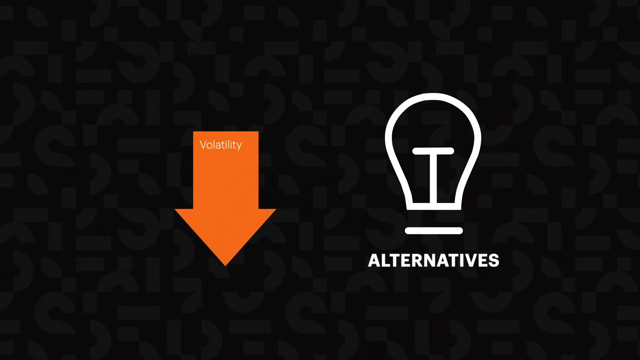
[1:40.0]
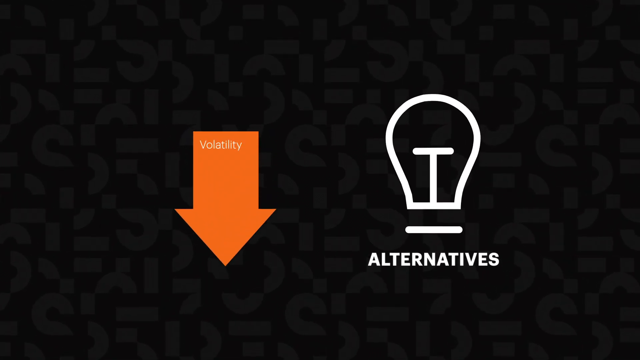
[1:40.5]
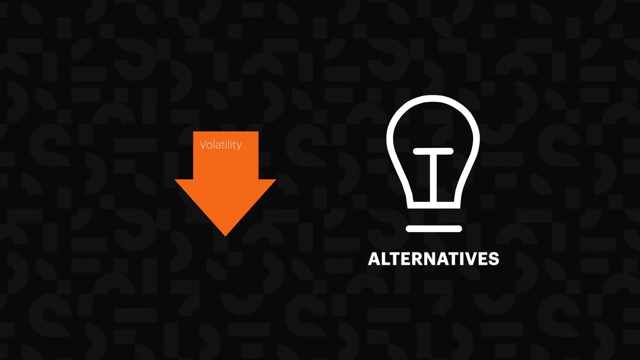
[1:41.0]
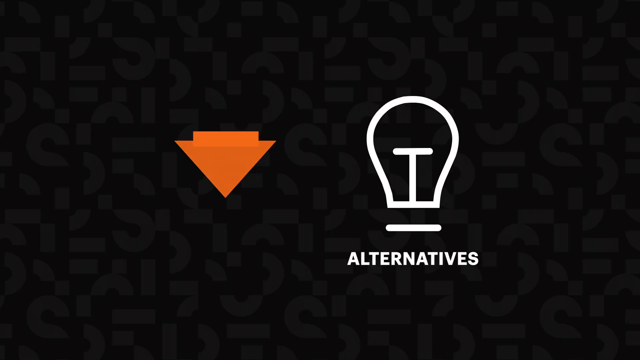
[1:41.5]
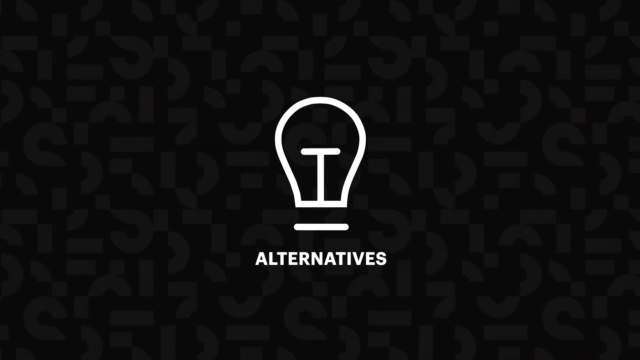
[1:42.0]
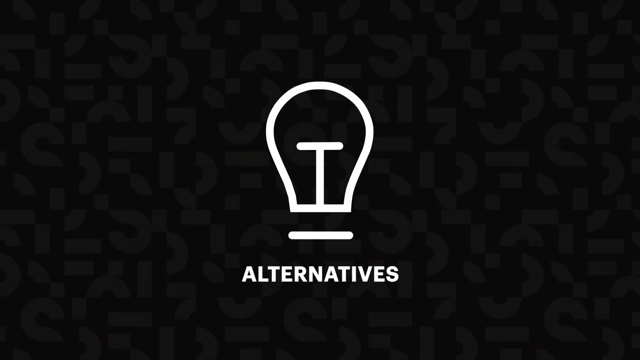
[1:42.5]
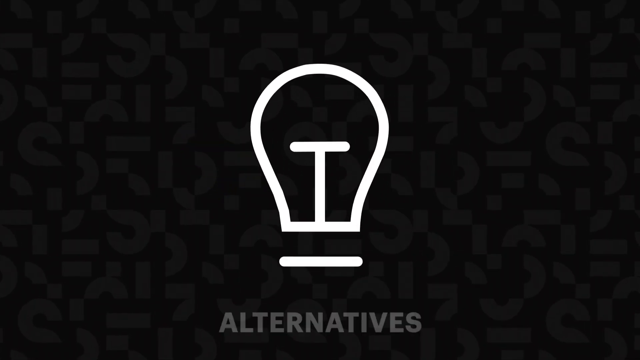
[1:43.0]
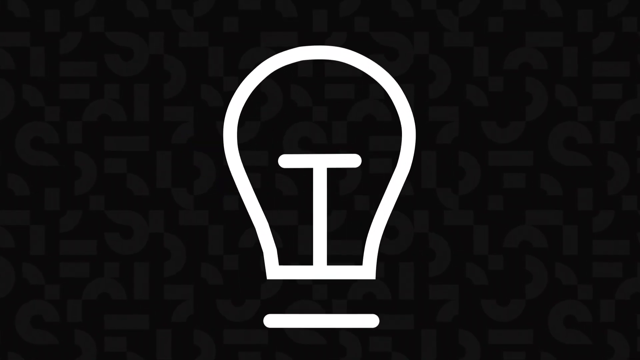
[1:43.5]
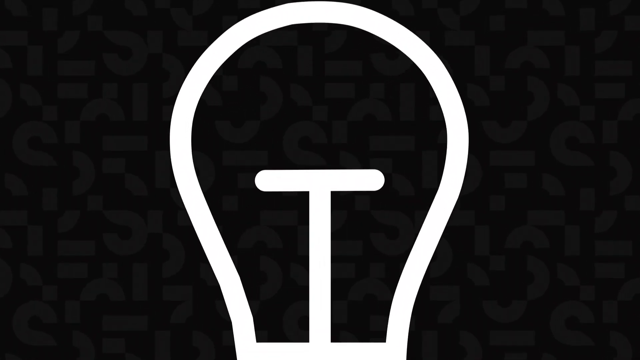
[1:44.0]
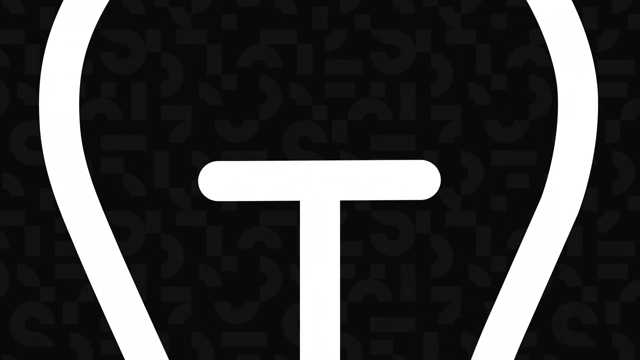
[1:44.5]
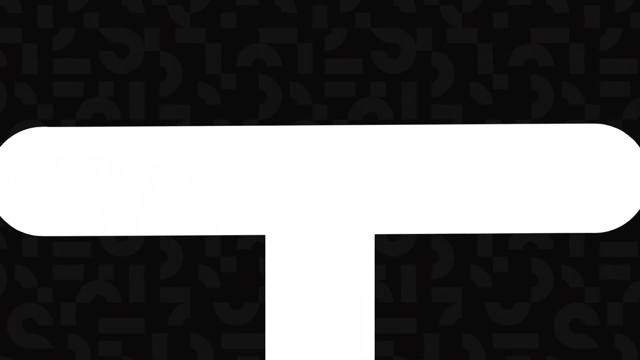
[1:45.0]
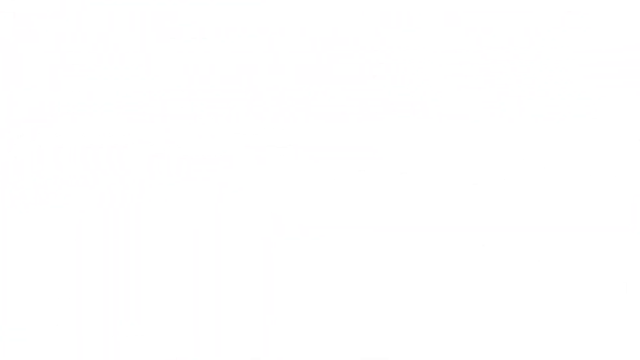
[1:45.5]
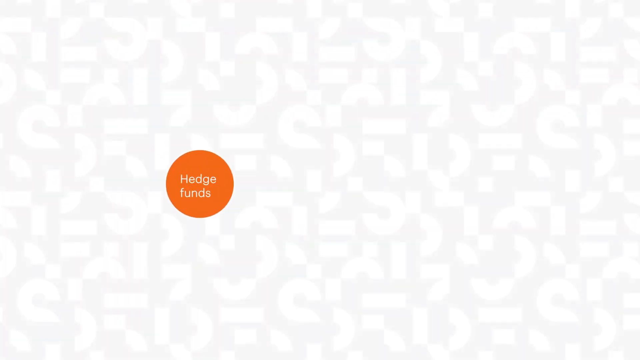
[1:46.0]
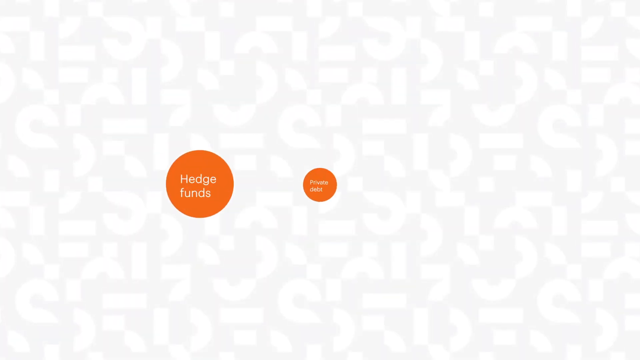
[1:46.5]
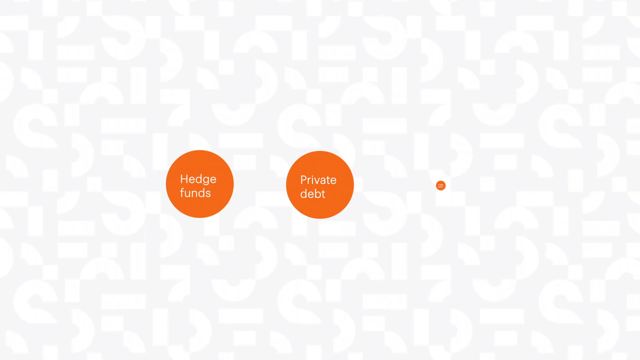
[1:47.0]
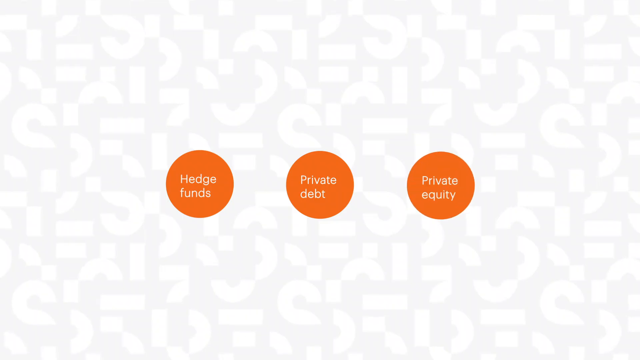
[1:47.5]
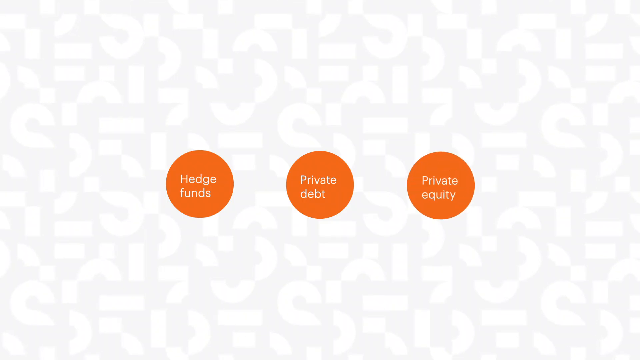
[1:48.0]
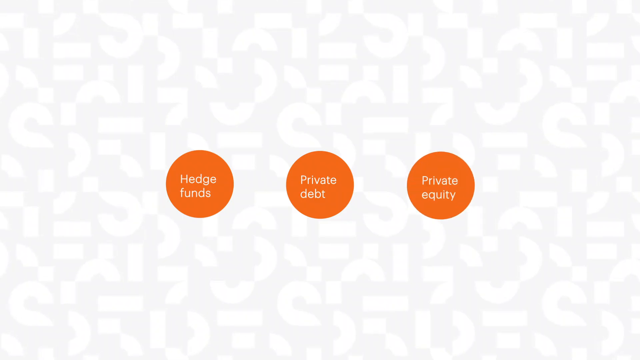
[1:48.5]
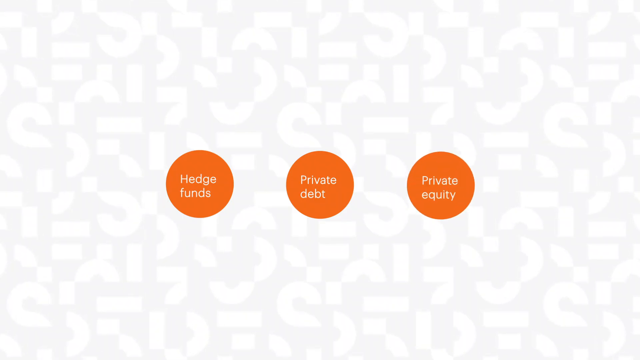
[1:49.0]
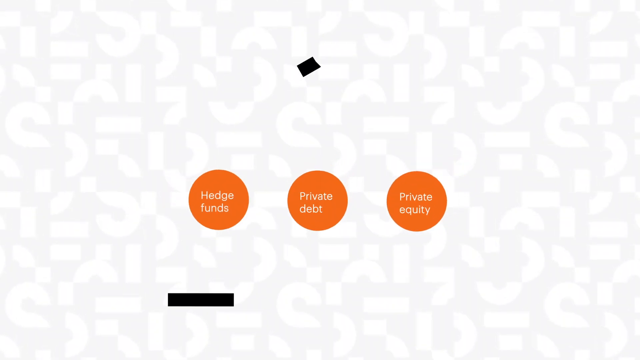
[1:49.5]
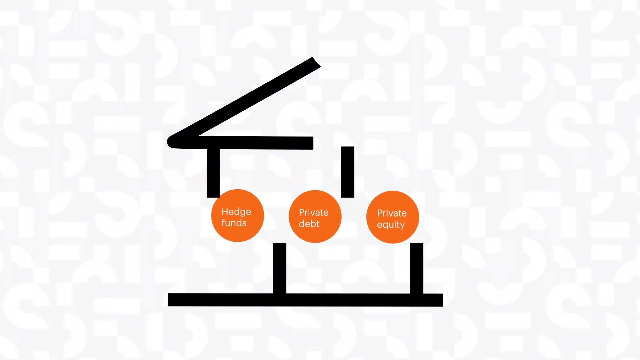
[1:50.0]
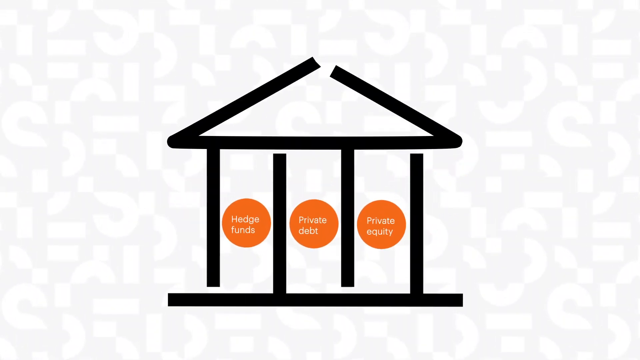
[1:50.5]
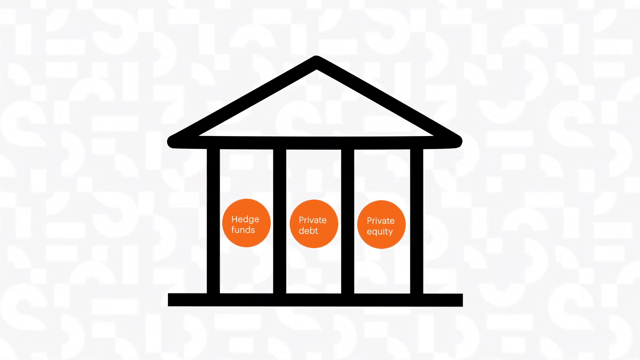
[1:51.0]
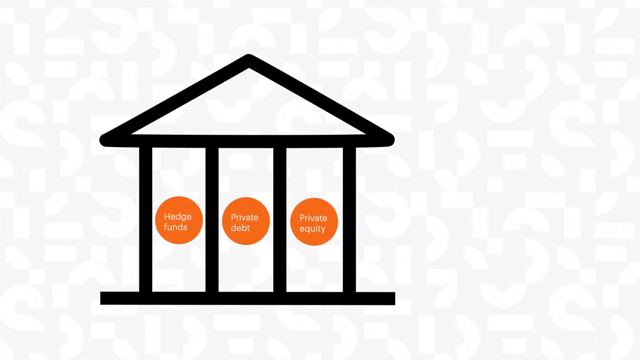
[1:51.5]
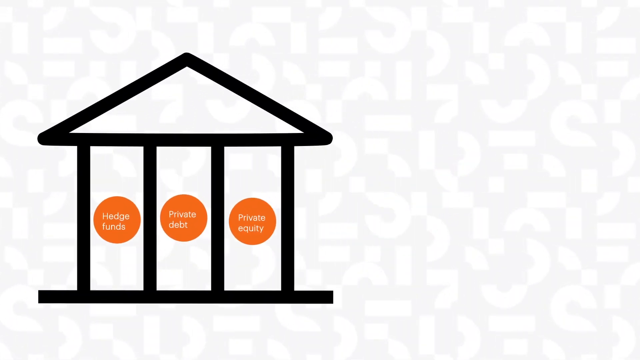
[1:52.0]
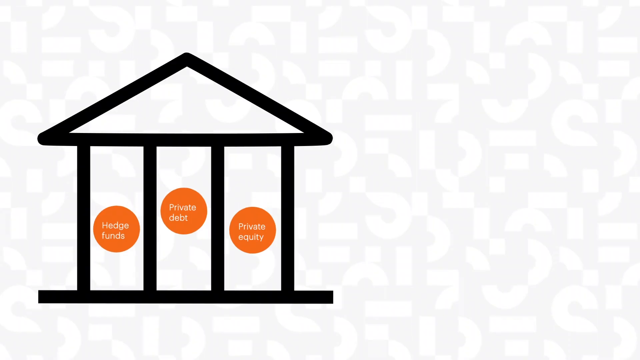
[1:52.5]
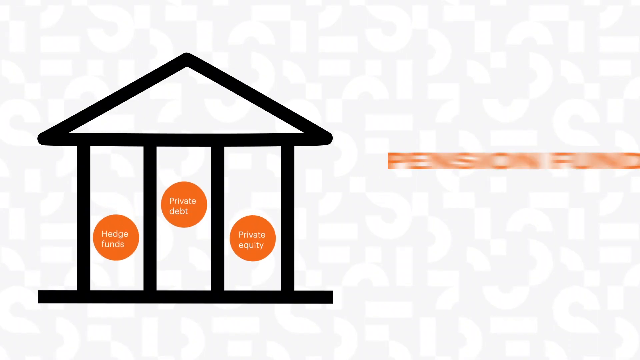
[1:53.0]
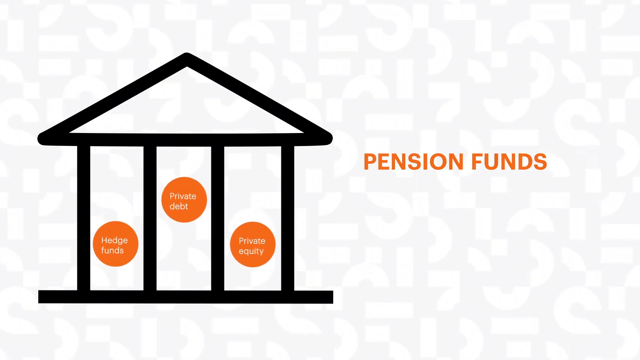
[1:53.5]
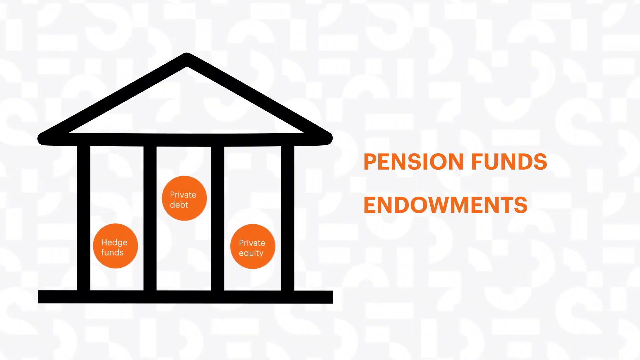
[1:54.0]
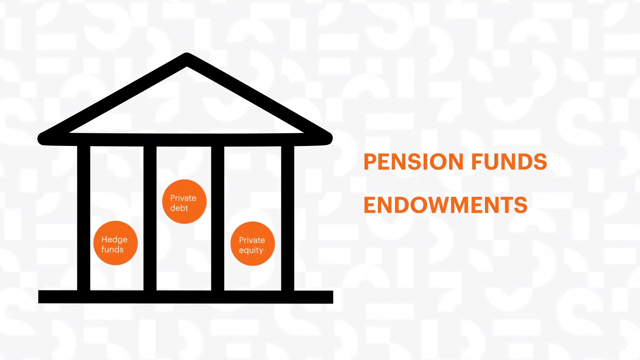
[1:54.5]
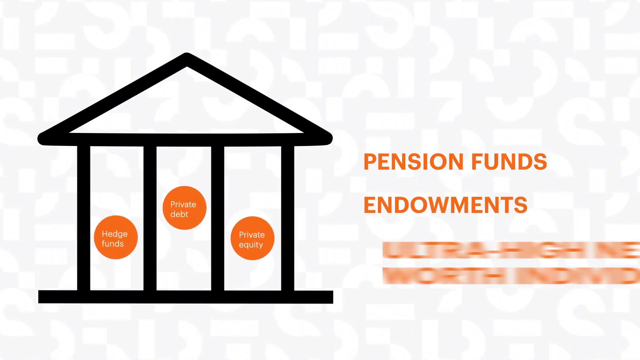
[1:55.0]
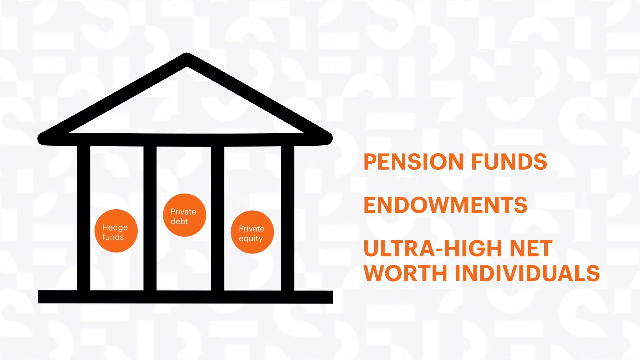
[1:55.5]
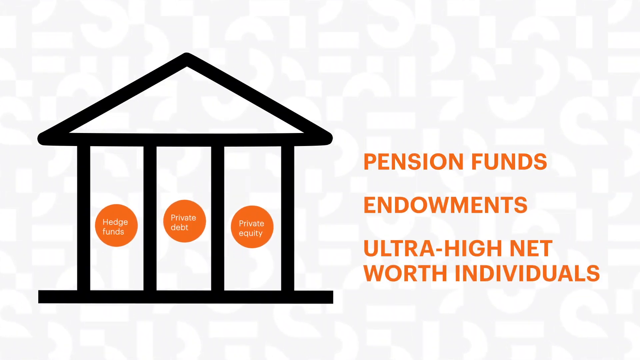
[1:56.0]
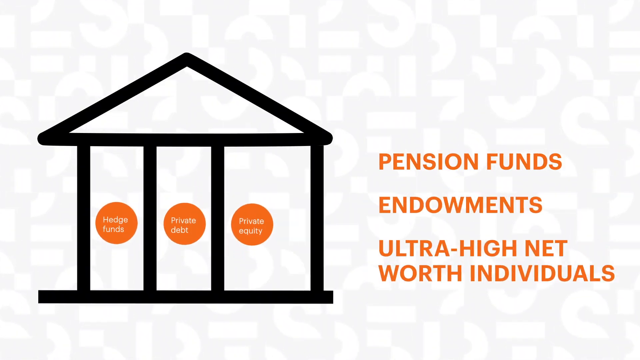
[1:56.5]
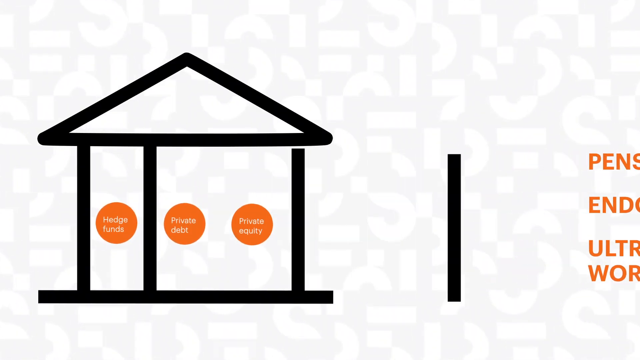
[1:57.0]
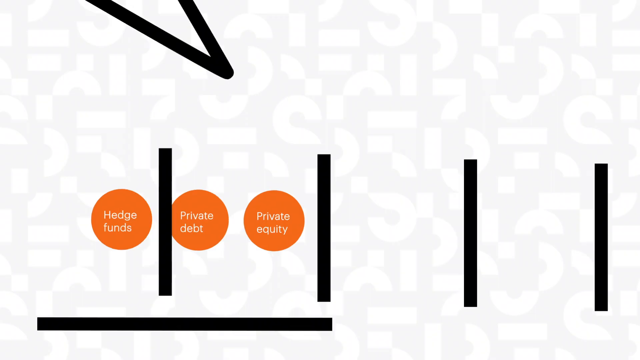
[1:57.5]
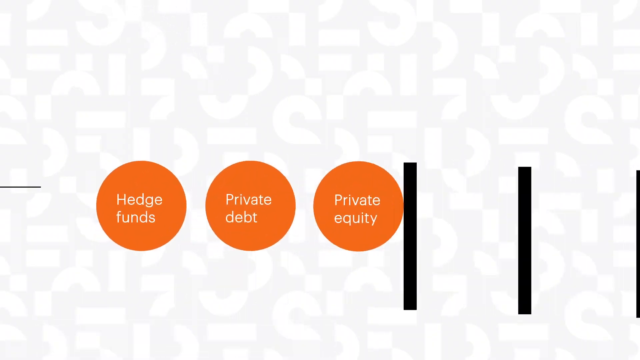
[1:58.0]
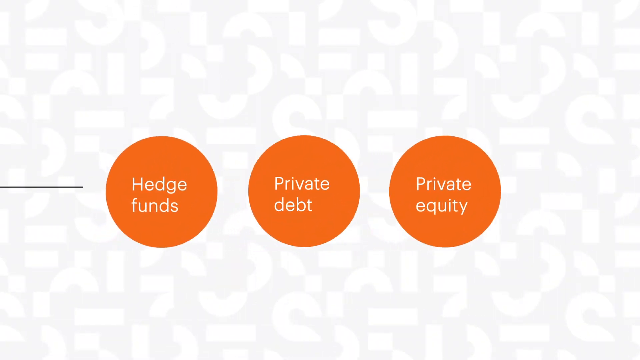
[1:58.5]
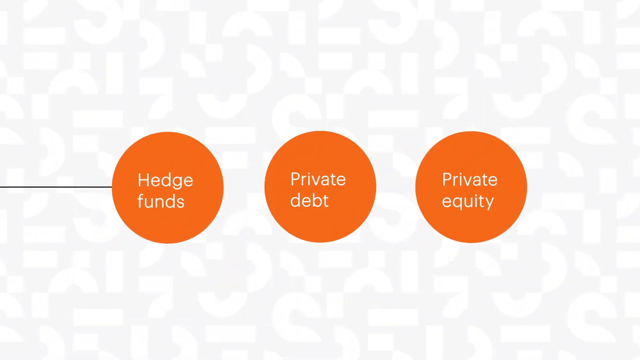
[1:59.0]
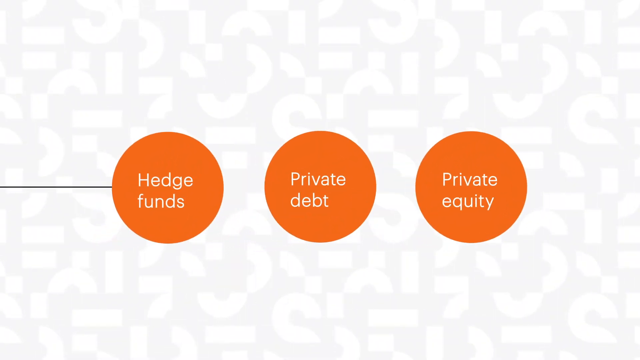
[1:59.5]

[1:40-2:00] An orange arrow on the left side of the screen has "volatility" in small white text on top of it. On the right is a drawn outline of a light bulb with "alternatives" in capitalized white text underneath. The arrow disappears, and the light bulb moves to the center of the screen and zooms in, getting bigger and bigger as it approaches the viewer until it overtakes the screen and everything is white. An orange circle appears that says "hedge funds," then another that says "private debt," and another that says "private equity"; the text is white, and the circles are fairly small, in the middle of the screen. They shrink, and a simple black outline of a house, with a triangular roof and four columns, is animated around them. The orange all-caps text "pension funds," "endowments," "ultra high net worth individuals" appears on the right. The circles then expand in the middle of the screen, and a black line appears behind them, connecting them like a string of beads.